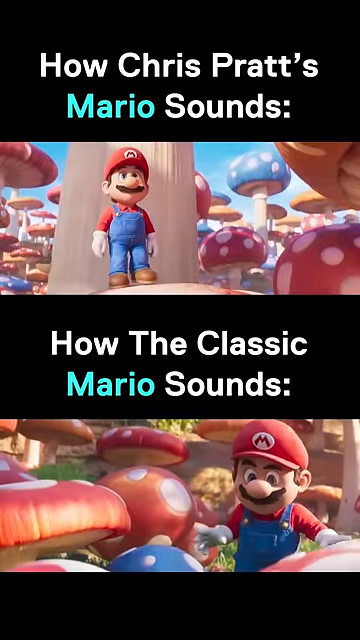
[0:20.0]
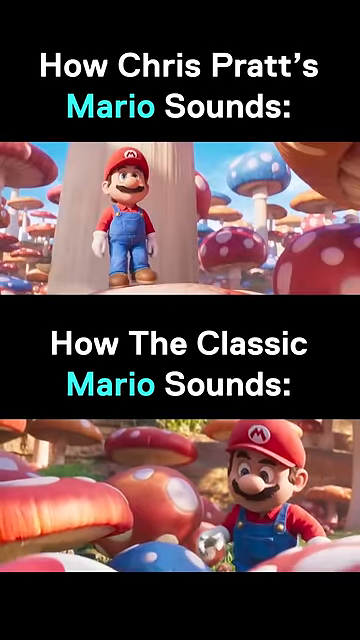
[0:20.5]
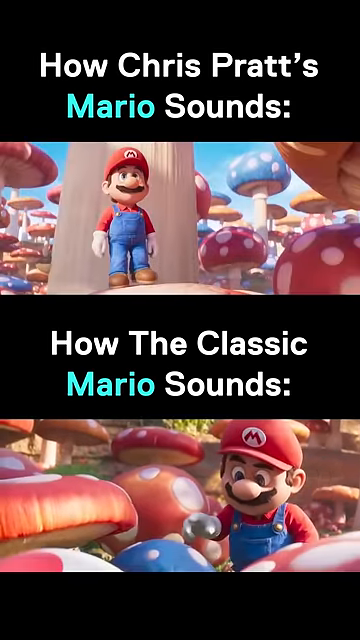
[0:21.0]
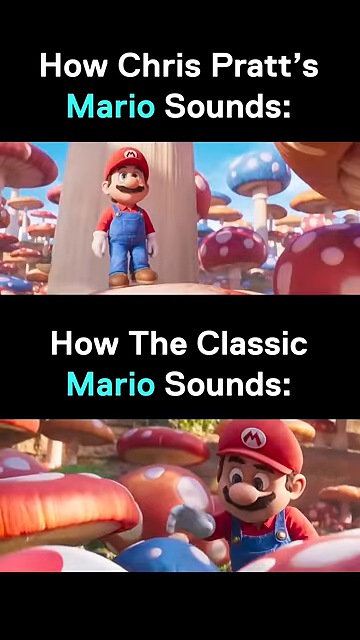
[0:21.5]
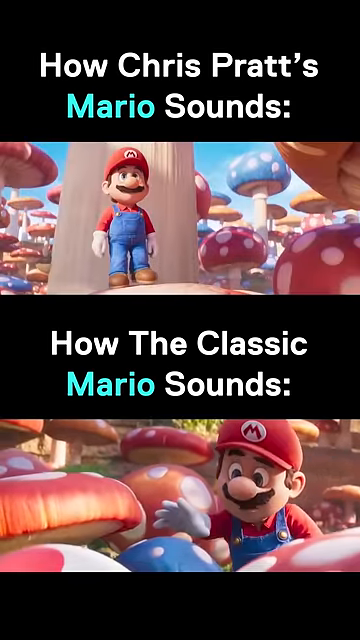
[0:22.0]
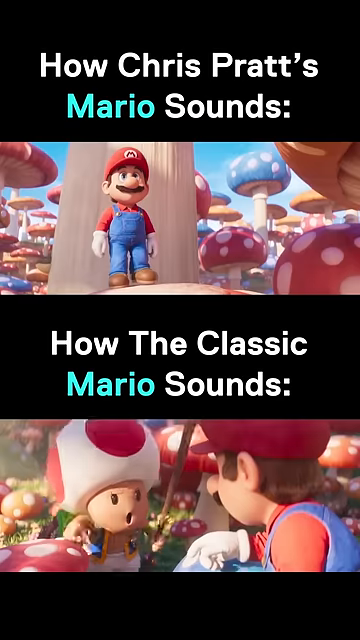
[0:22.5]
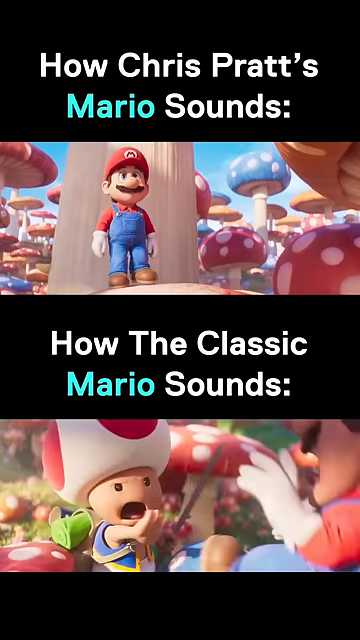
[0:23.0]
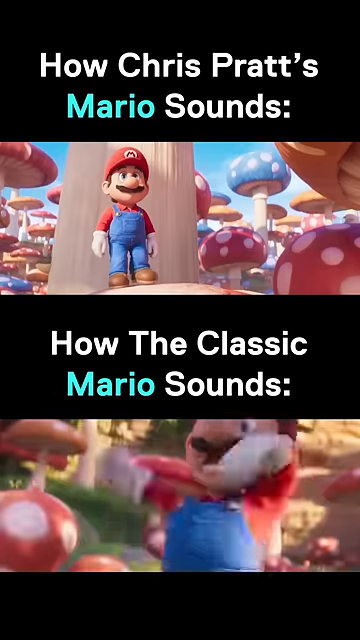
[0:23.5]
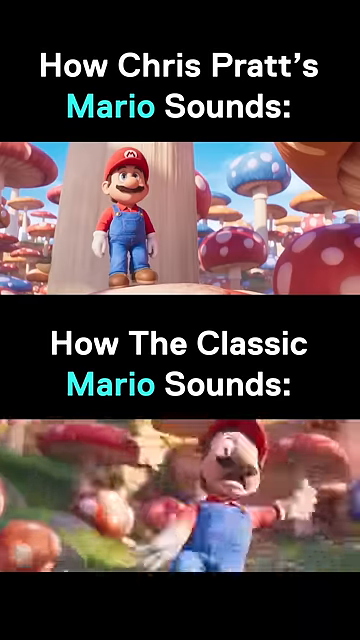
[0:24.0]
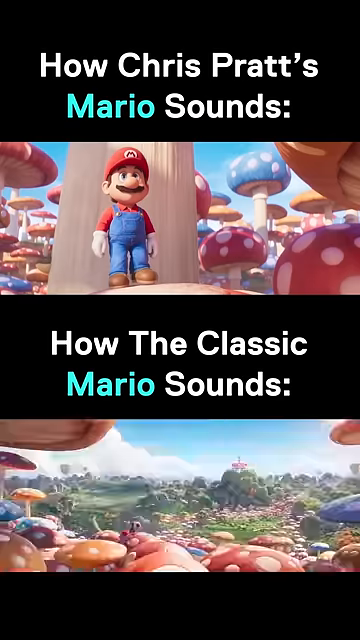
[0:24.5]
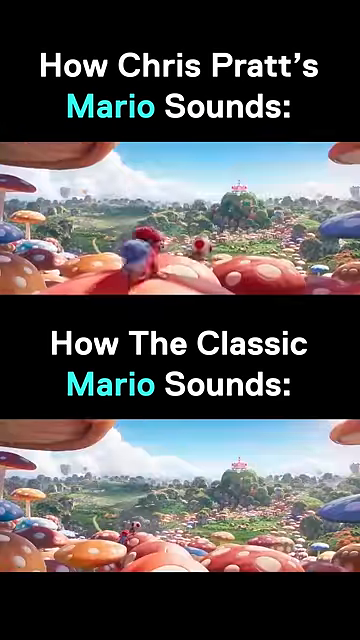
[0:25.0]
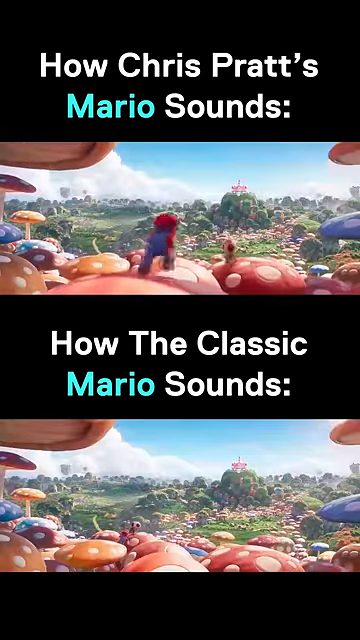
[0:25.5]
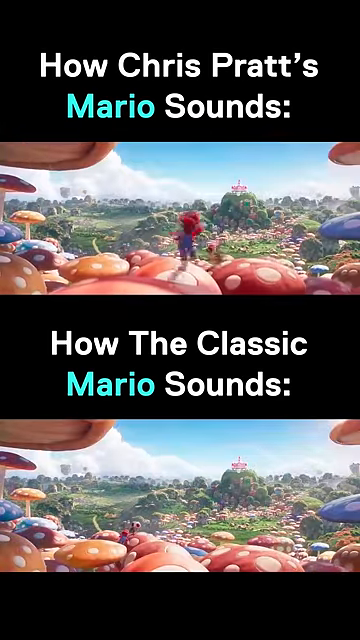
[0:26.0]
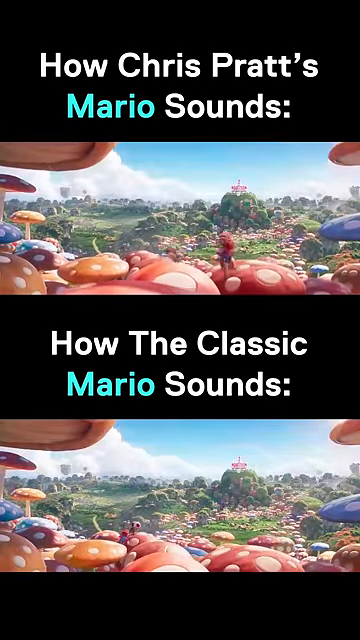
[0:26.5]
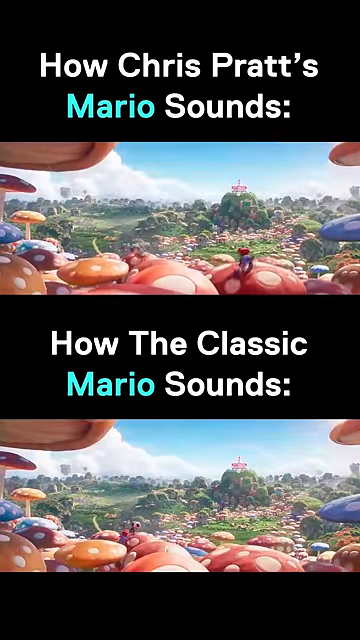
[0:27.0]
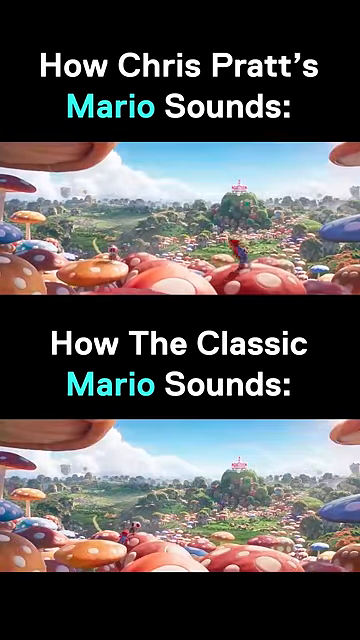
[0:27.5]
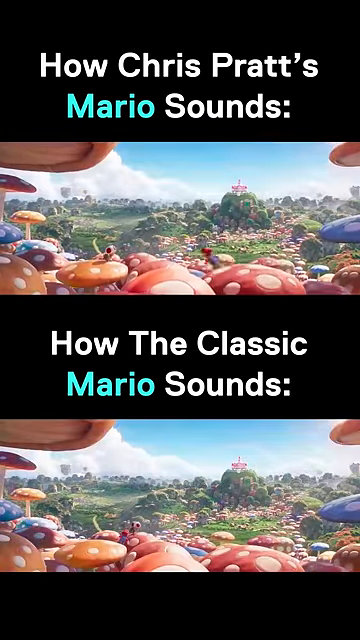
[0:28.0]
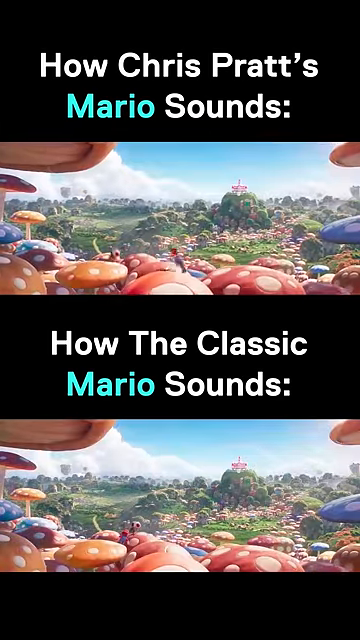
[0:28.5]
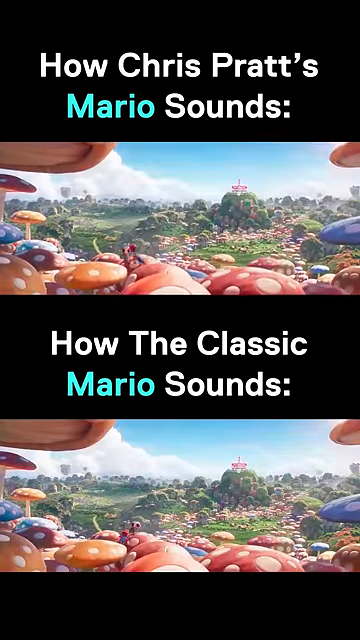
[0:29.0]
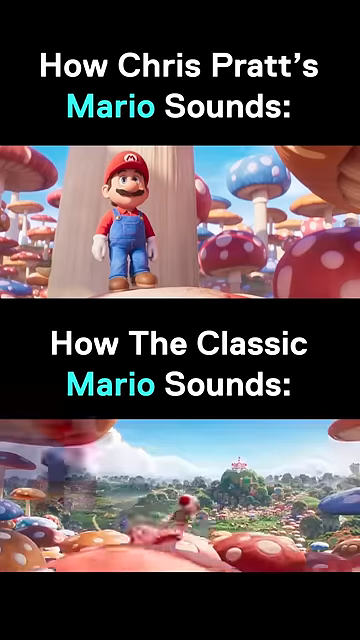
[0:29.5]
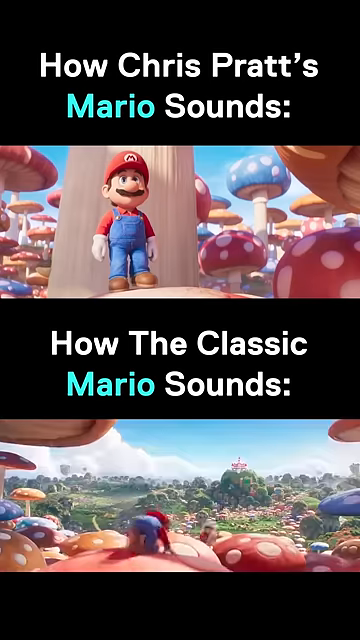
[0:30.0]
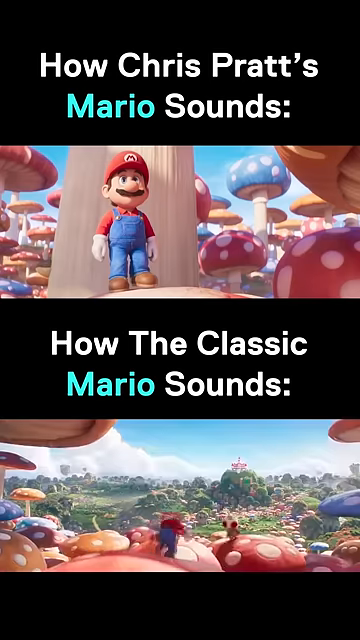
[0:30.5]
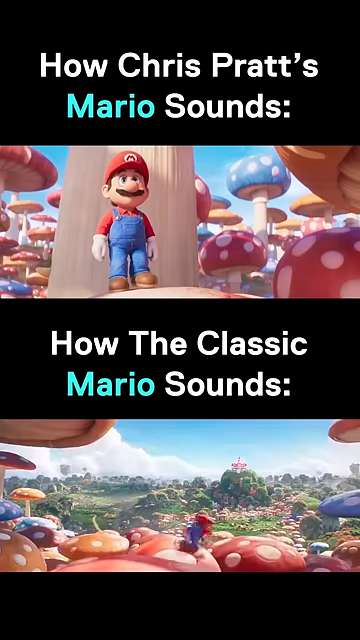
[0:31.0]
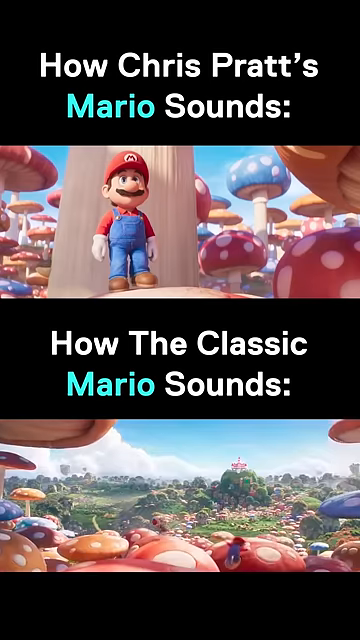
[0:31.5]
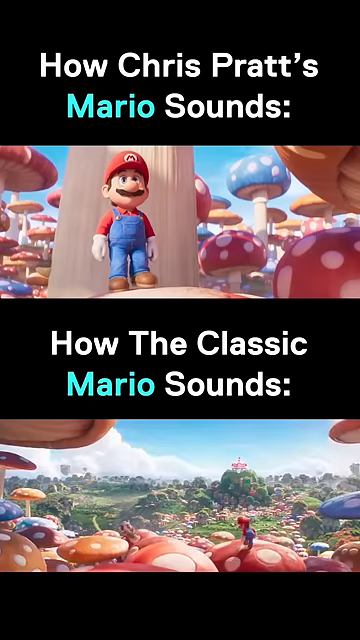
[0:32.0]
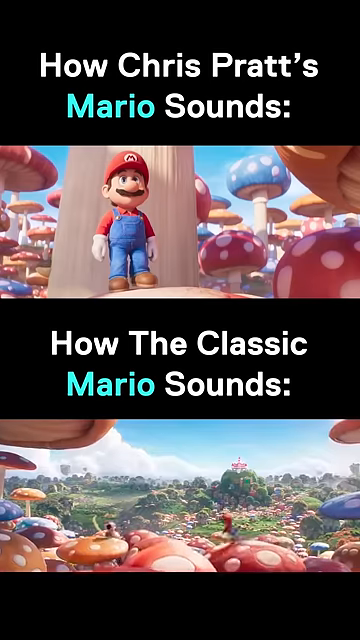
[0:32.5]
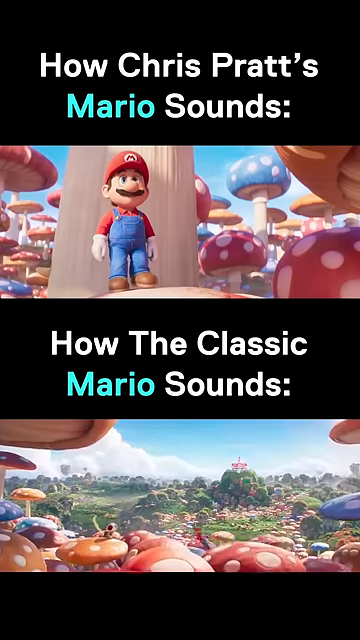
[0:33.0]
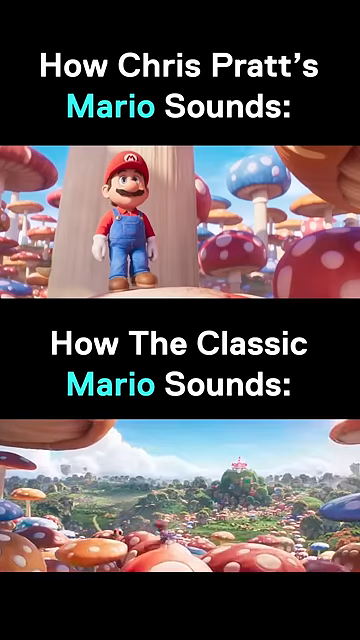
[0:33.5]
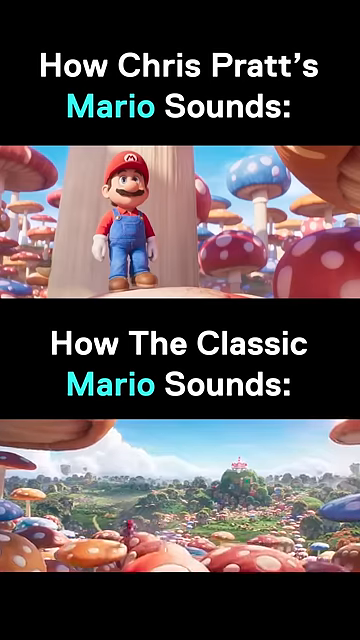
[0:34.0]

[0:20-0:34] The top video pauses while the video on the bottom plays. In it, Super Mario walks up to a mushroom, and the character Toad pops out from a group of mushrooms, surprising him. Mario gets scared and falls down backwards. The bottom video pauses and the top video resumes, showing Mario chasing Toad across numerous different mushrooms; they bounce across the mushrooms as Toad runs away from Mario. The top video then pauses and the bottom video resumes, playing the same scene of Toad running across the tops of the mushrooms while Mario chases him across the mushroom heads.